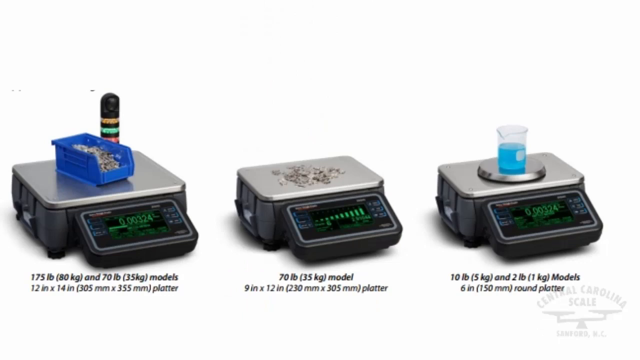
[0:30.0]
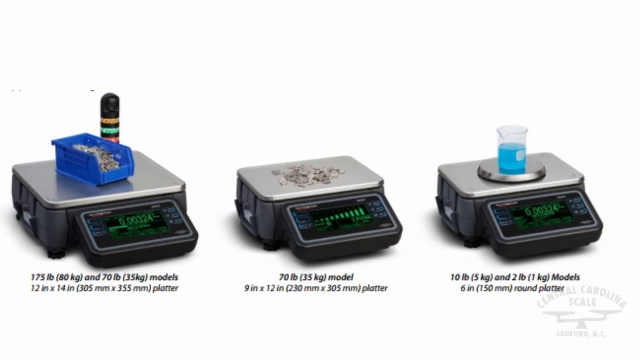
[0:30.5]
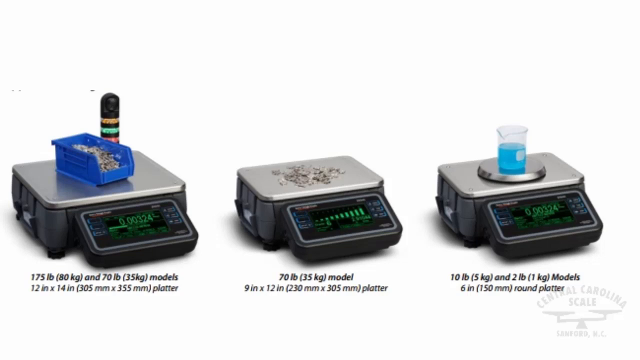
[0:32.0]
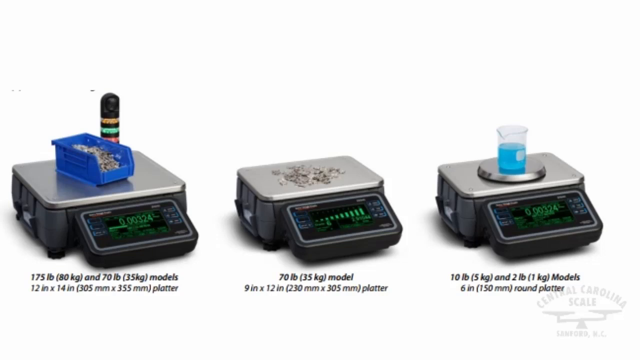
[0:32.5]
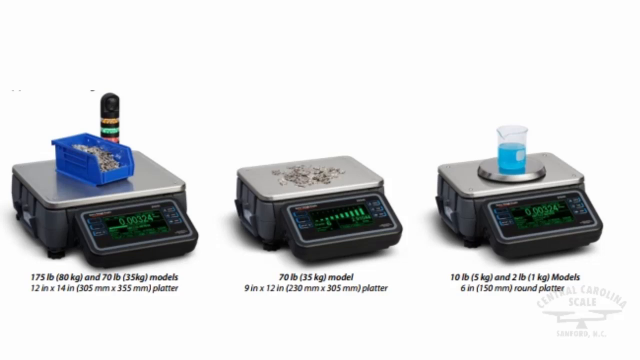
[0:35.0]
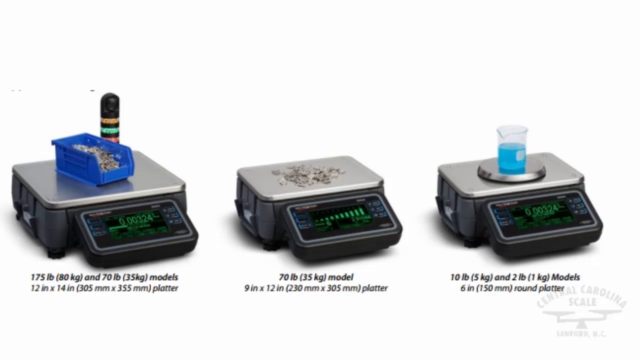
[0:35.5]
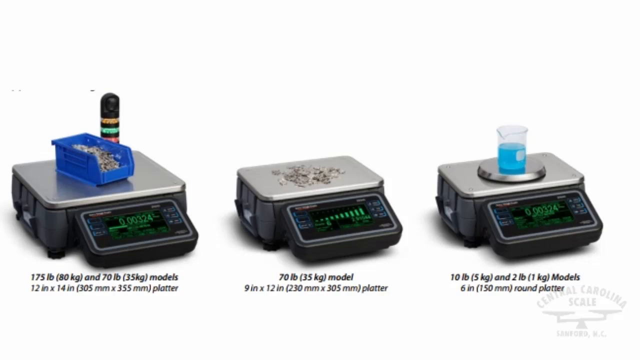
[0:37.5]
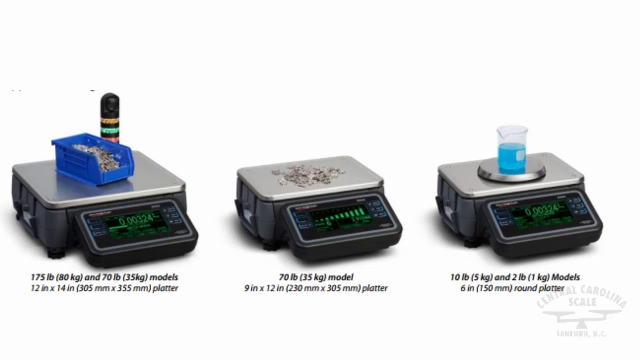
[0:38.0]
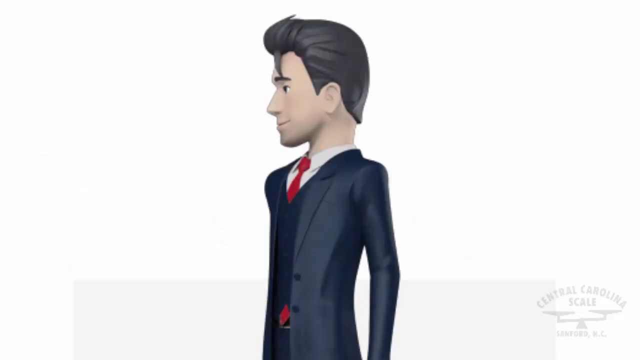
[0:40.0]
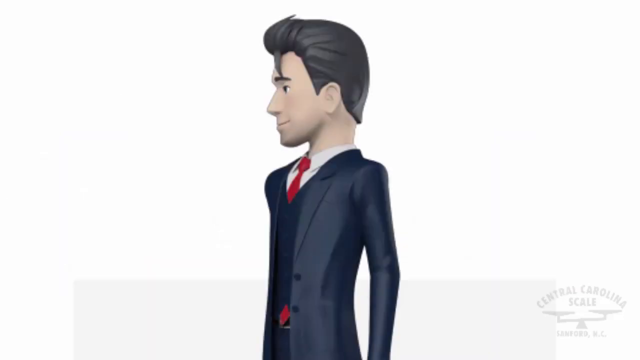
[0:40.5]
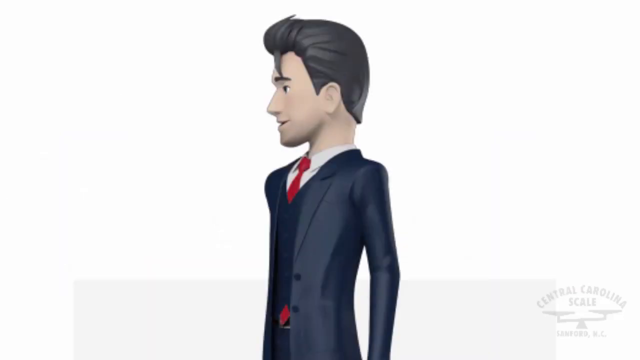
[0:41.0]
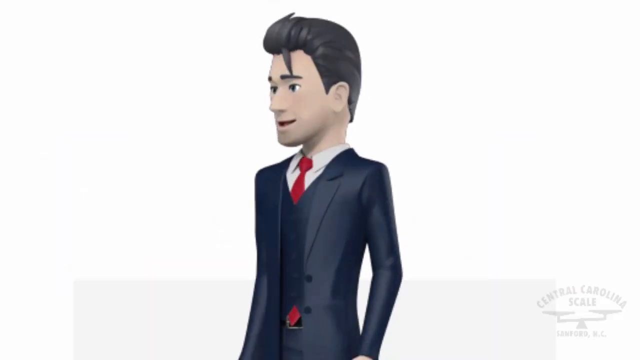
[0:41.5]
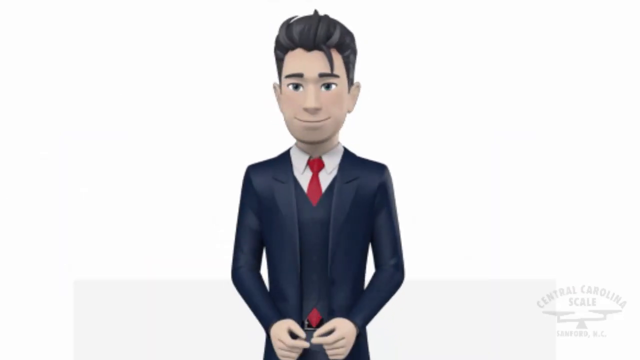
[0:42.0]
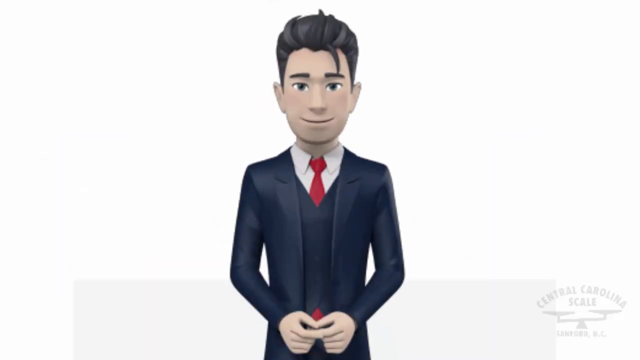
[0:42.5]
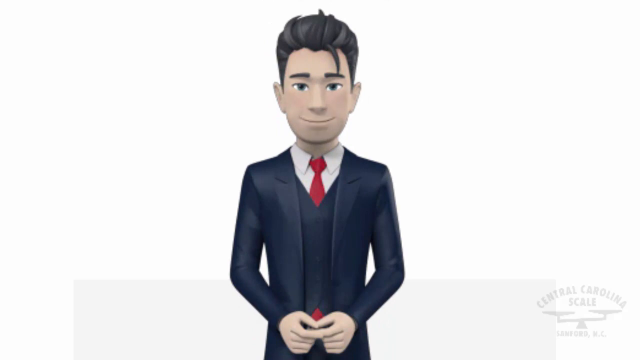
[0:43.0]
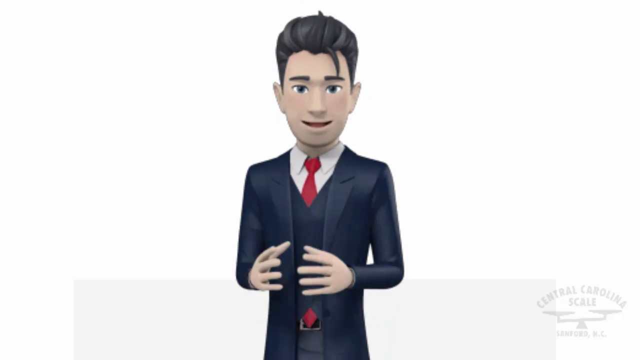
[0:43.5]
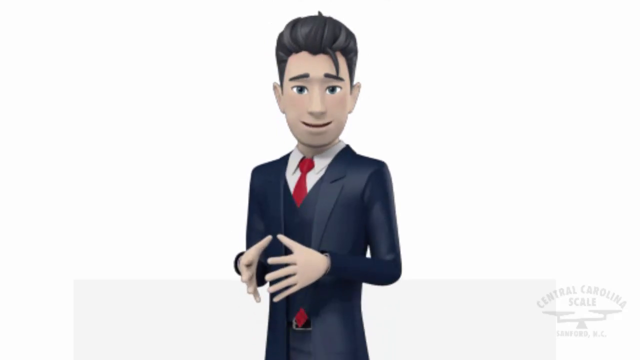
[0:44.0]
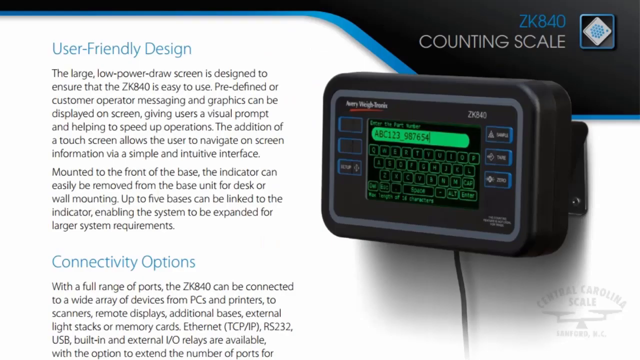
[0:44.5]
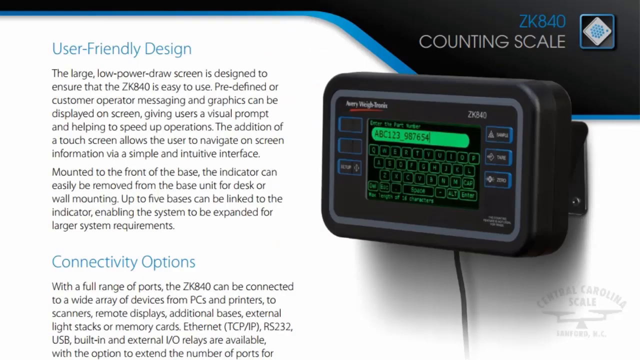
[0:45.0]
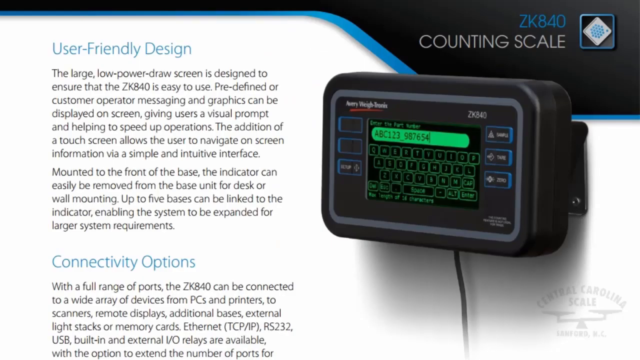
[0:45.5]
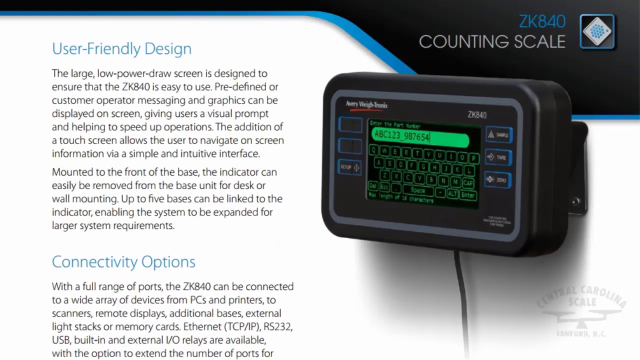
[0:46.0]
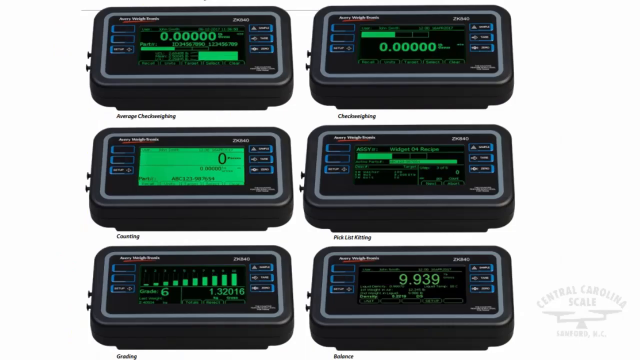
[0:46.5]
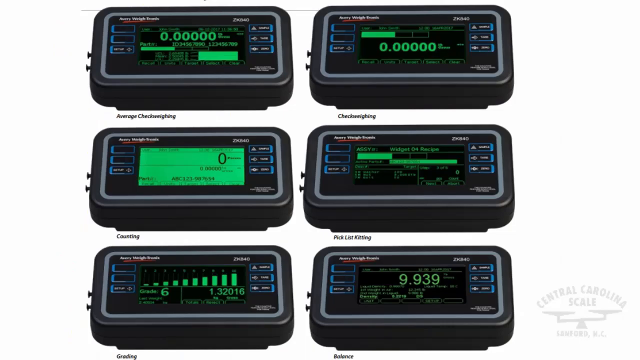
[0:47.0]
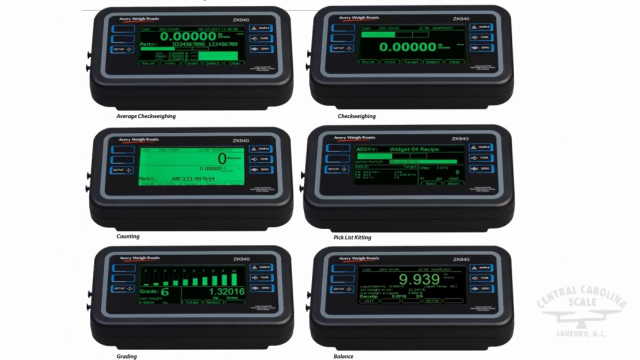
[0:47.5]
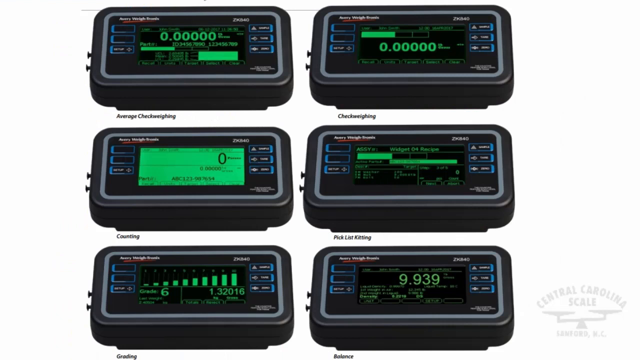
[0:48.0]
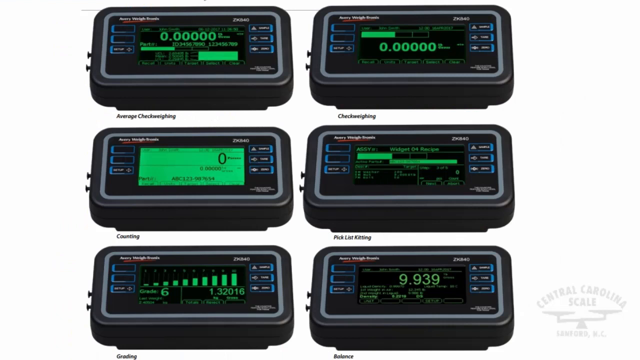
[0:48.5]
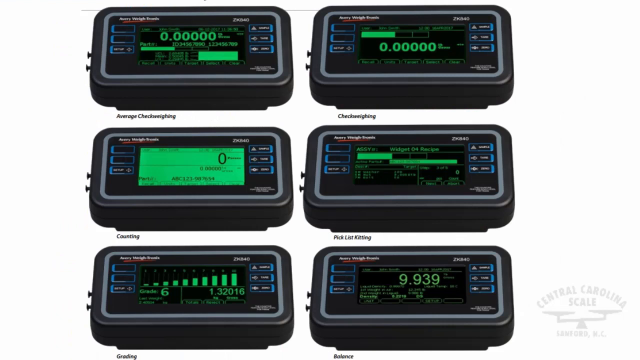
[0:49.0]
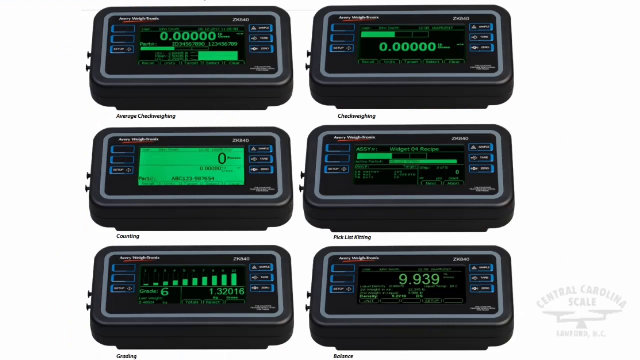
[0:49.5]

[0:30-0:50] Three scales hold various objects: there are two objects on the left one, what looks like maybe some change on the middle one, and a beaker of blue liquid on the right one. The video cuts to a man who is talking. He has dark hair and wears a black suit and a red tie. He is seen in profile, then turns to face the camera and puts his hands together. Another screen shows a counting scale on the right side of the screen. After that, a screen shows six different monitors that look similar to the one shown before. They display various things, and all of their numbers are green, making them stand out.